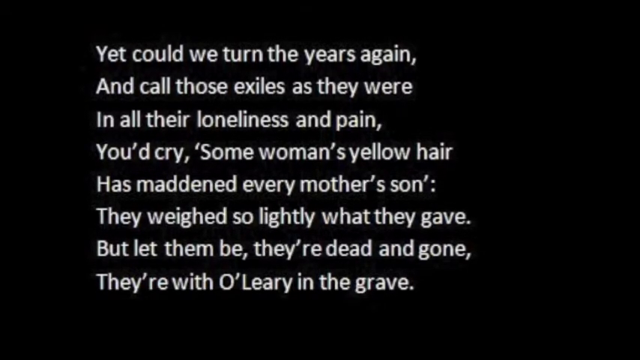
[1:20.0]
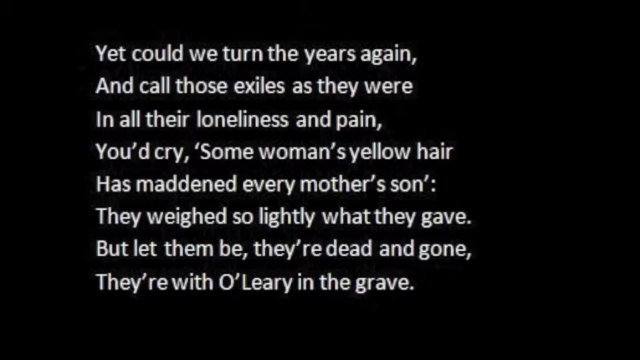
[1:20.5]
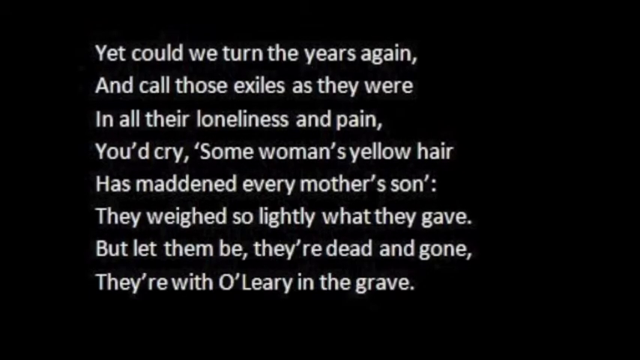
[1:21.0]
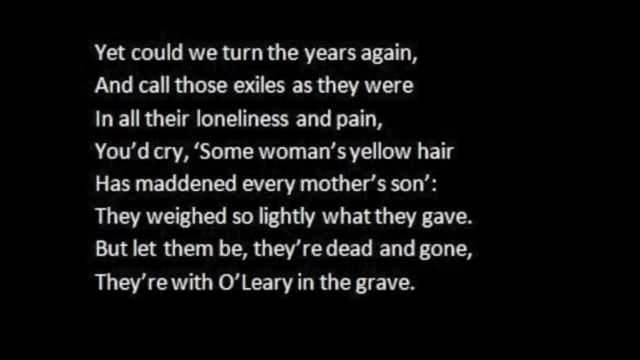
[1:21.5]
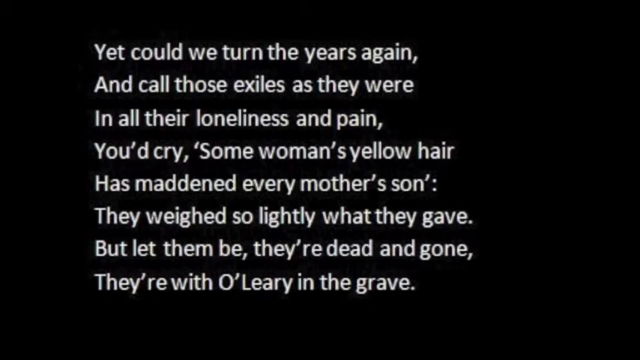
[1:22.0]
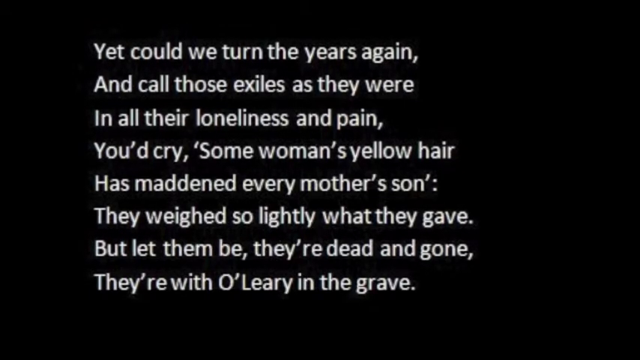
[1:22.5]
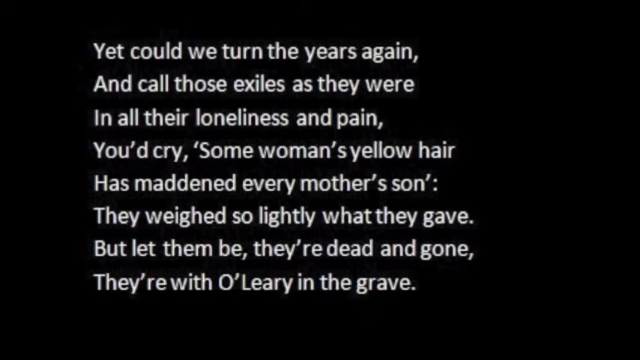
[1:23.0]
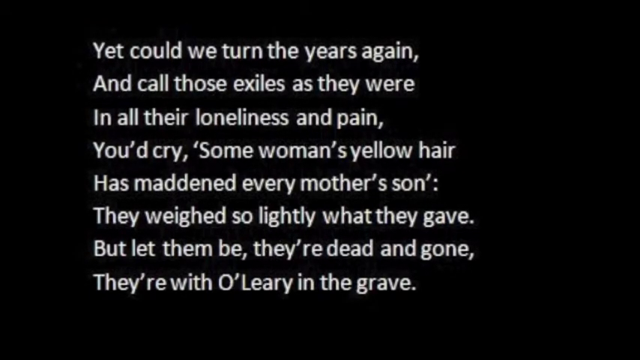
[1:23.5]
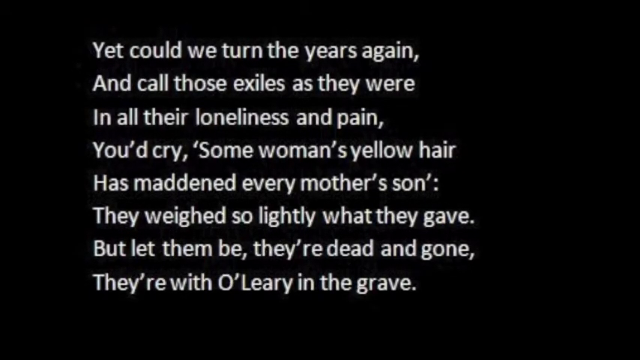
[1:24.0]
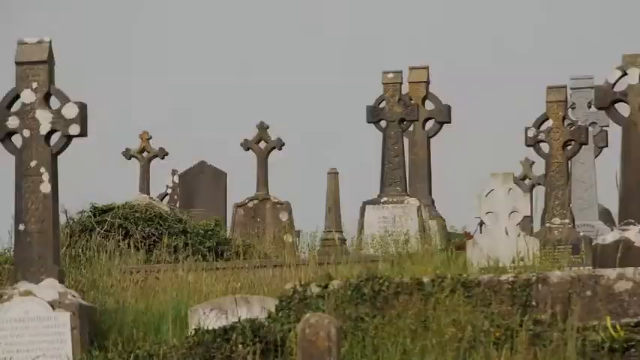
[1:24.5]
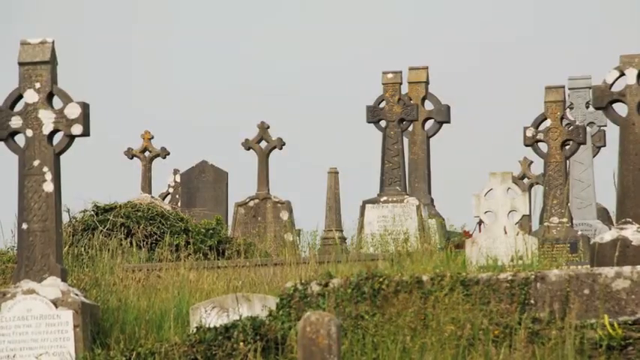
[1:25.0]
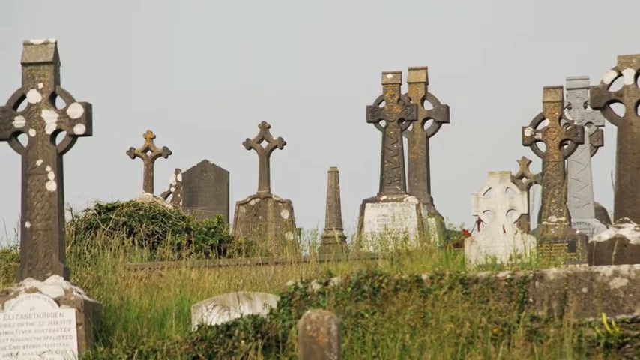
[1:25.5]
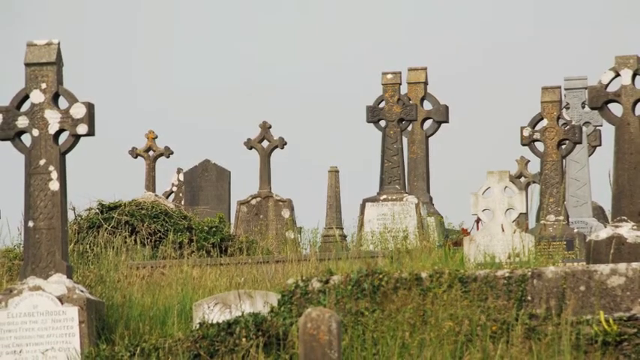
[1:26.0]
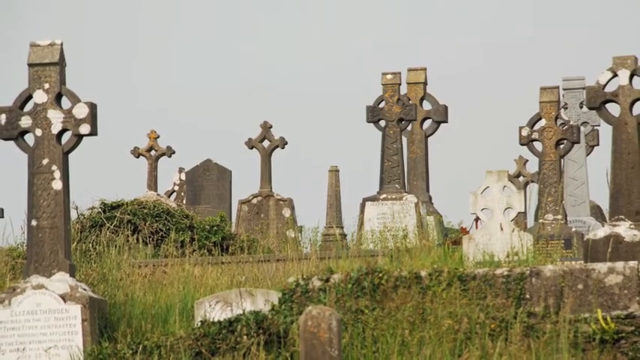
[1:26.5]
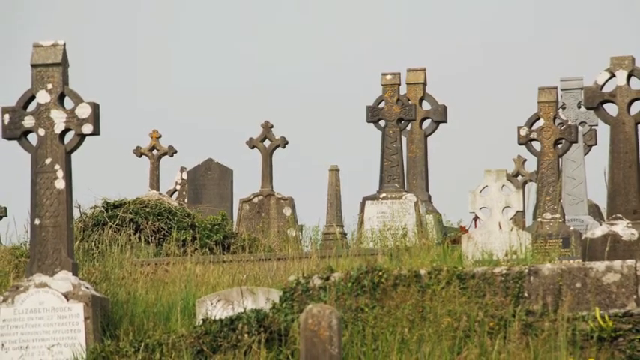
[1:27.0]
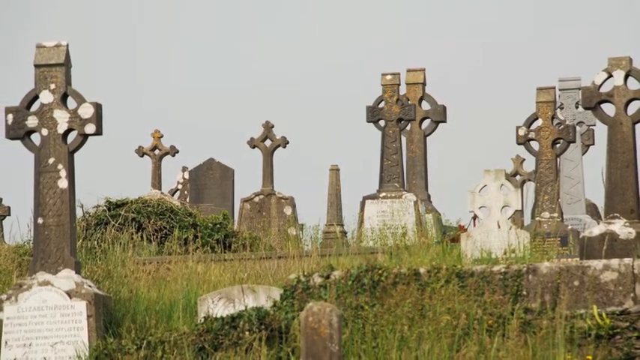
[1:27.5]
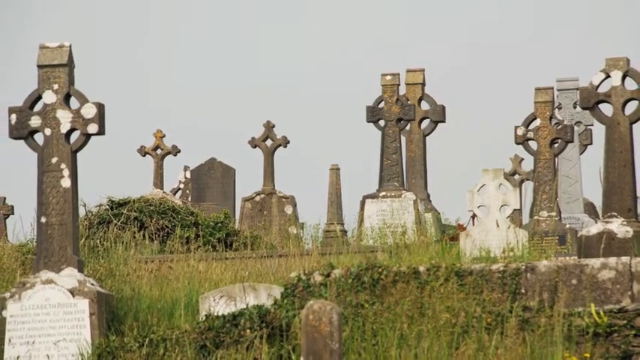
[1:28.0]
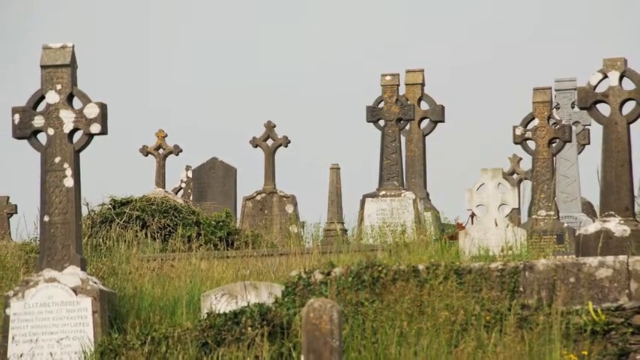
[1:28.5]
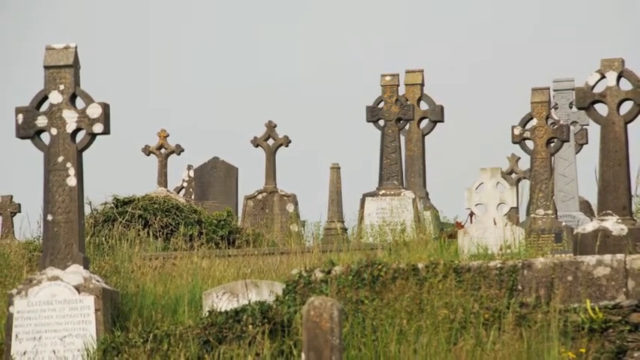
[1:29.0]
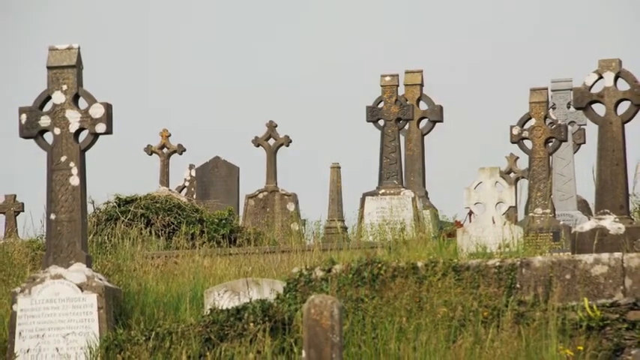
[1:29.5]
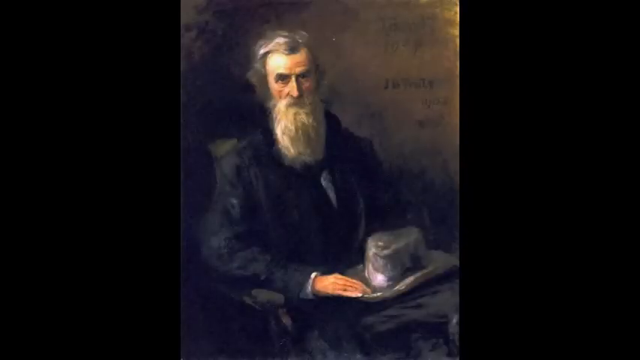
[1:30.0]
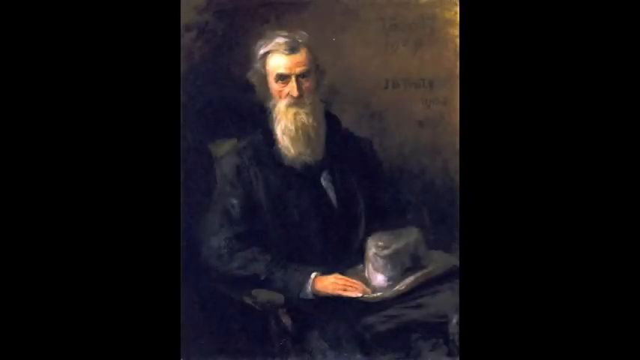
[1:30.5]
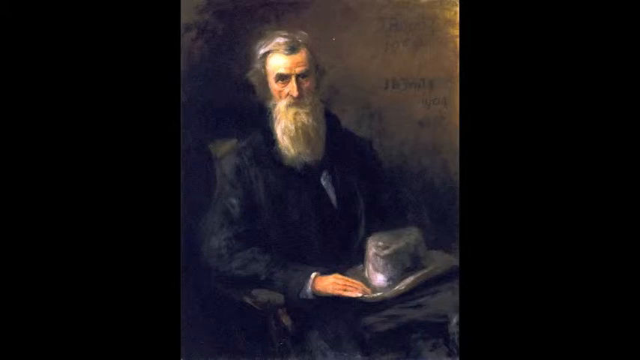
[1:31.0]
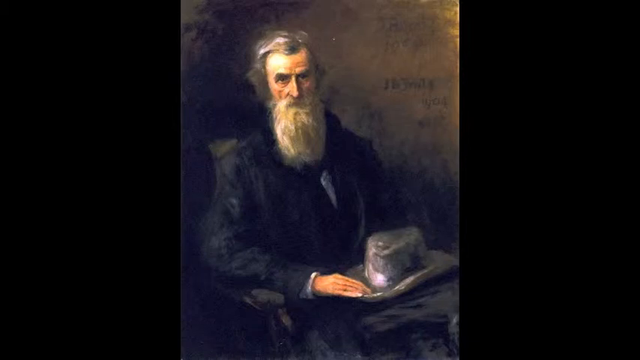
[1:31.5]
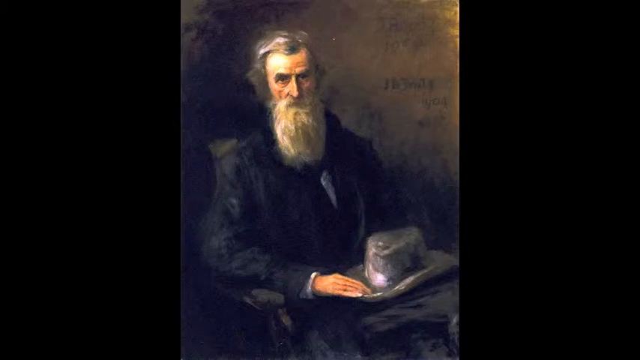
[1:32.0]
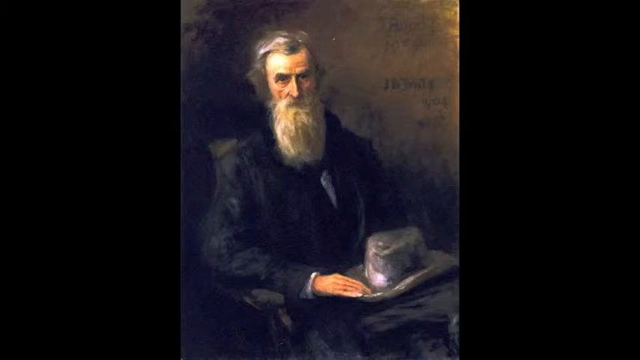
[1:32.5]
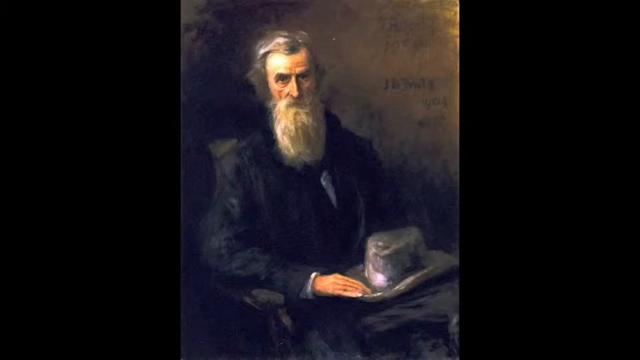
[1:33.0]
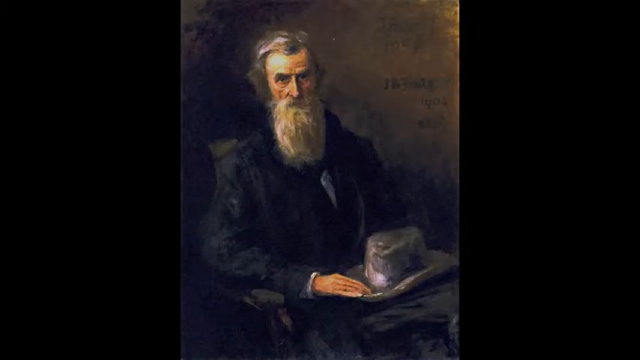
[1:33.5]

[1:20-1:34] A poem is on the screen in white print on a black background. The video cuts to an old Irish cemetery with many tombstones shaped like crosses; some of the crosses have a circle around them, and some have black spots on them. It then cuts to a painted portrait of an elderly man against a kind of brownish gray background. He has long gray hair and a beard that is white at the top and around the mouth and turns gray as it goes down his face to his chest. He wears what looks like a dress coat and has a gray cowboy hat on his lap with his hand resting on it.